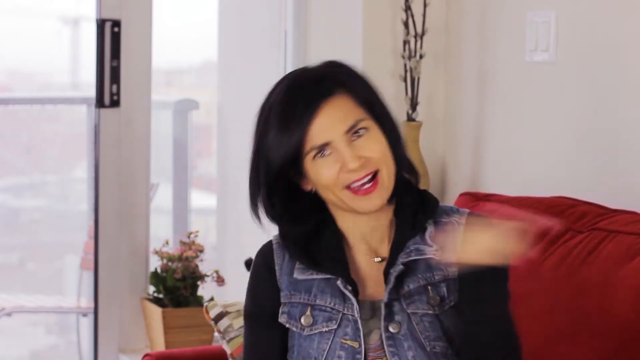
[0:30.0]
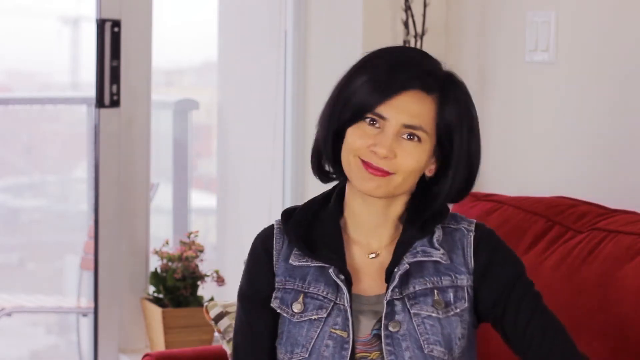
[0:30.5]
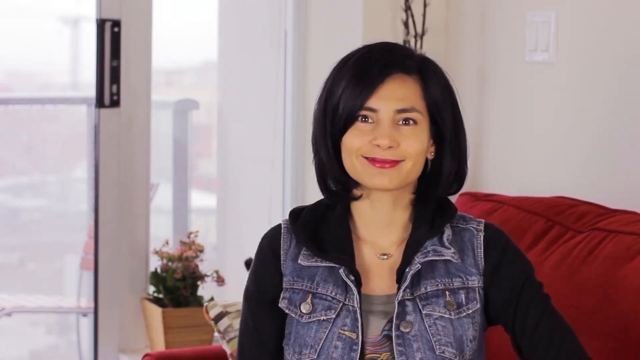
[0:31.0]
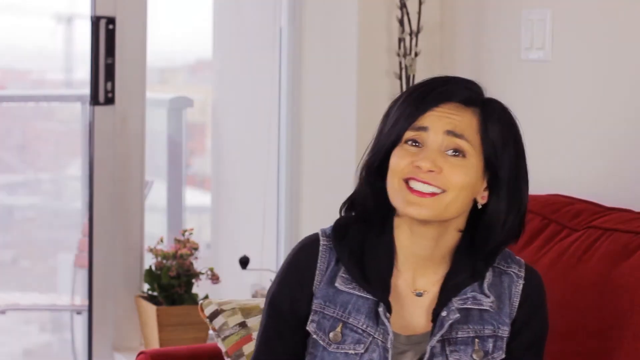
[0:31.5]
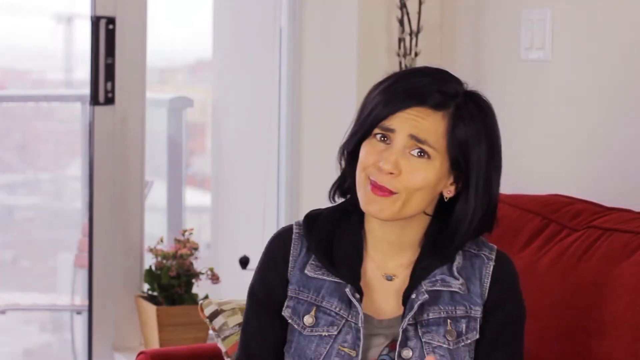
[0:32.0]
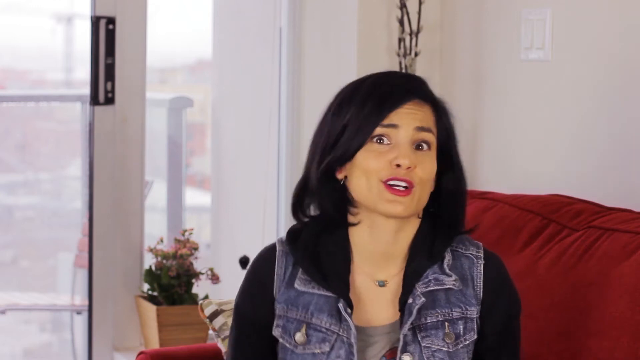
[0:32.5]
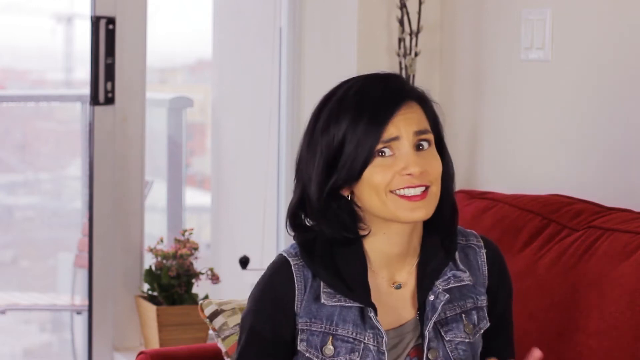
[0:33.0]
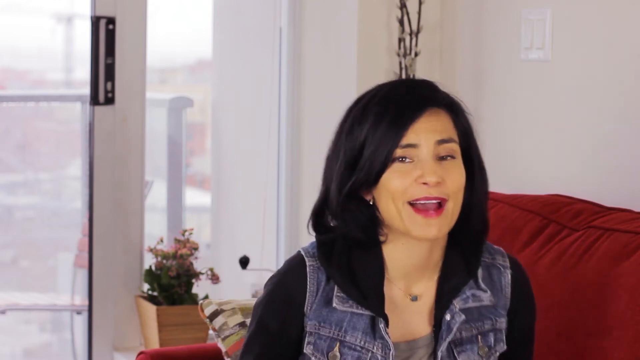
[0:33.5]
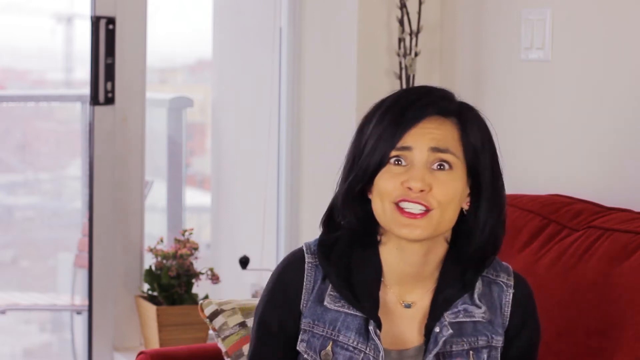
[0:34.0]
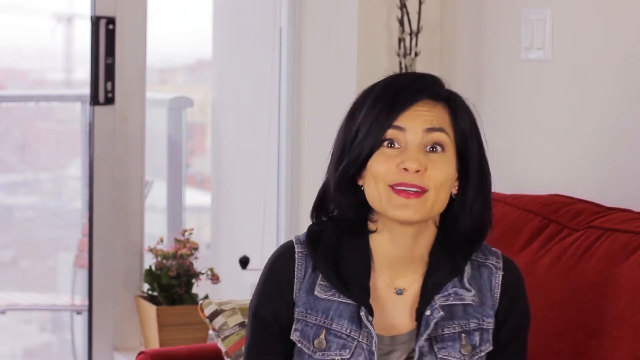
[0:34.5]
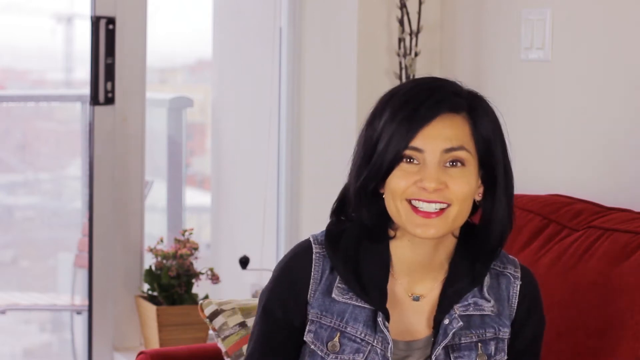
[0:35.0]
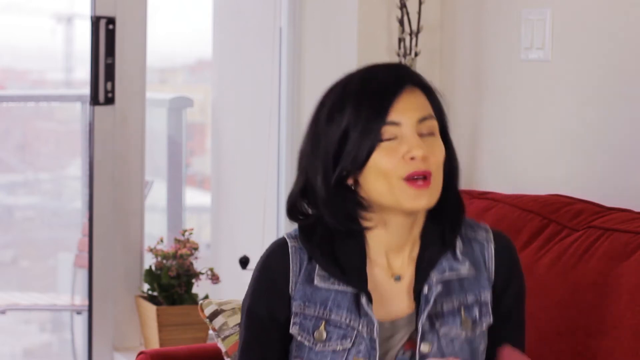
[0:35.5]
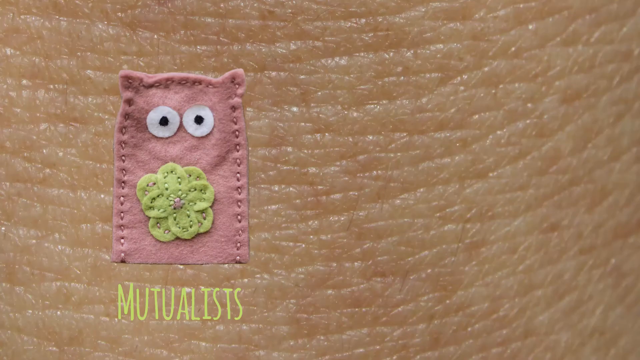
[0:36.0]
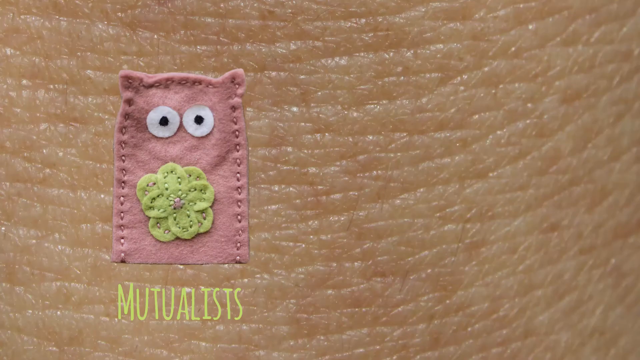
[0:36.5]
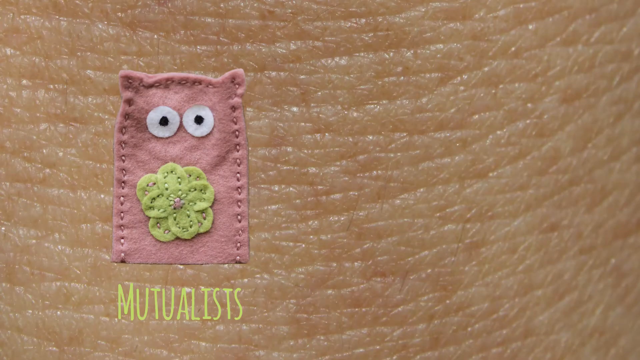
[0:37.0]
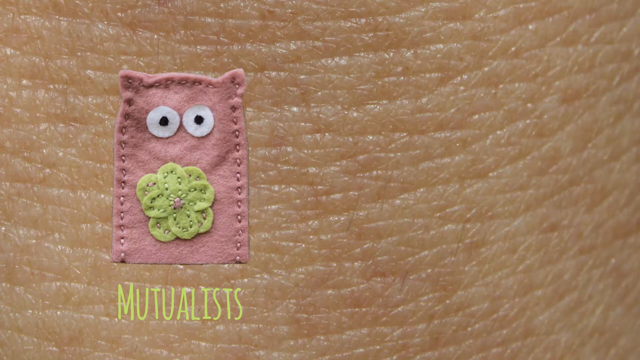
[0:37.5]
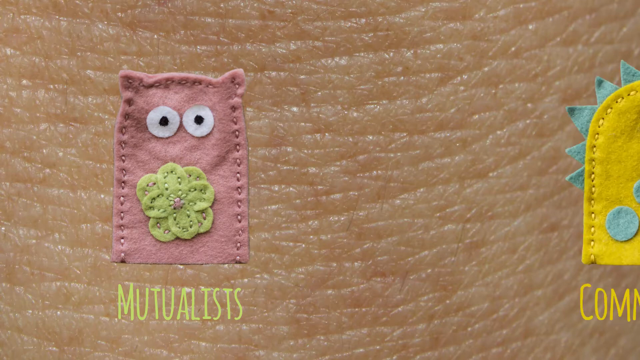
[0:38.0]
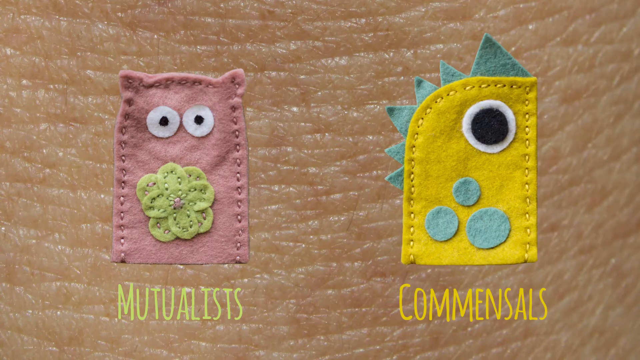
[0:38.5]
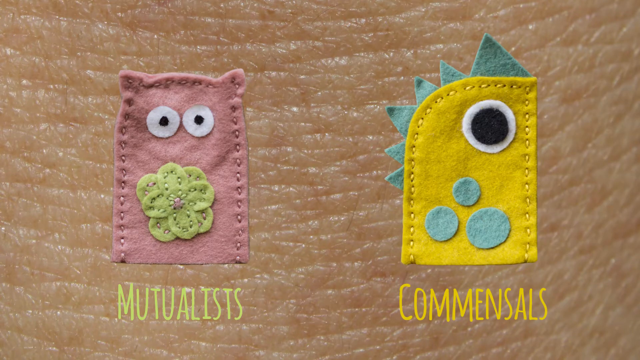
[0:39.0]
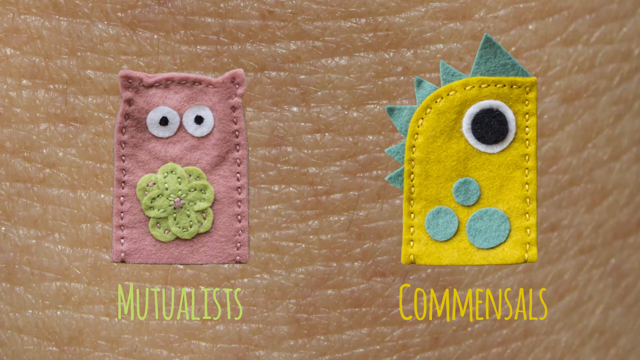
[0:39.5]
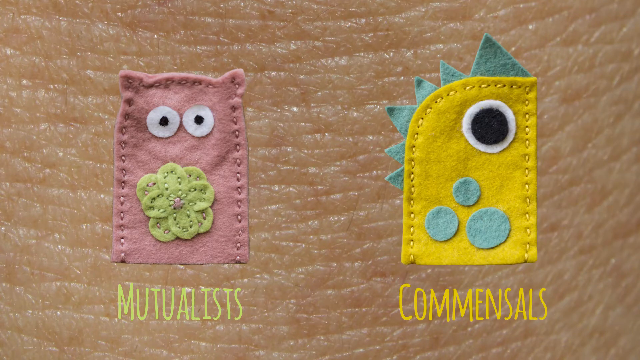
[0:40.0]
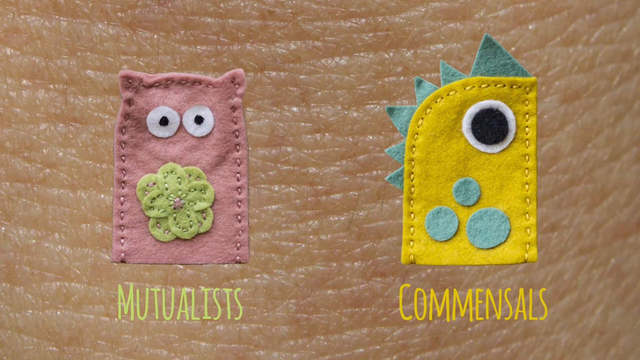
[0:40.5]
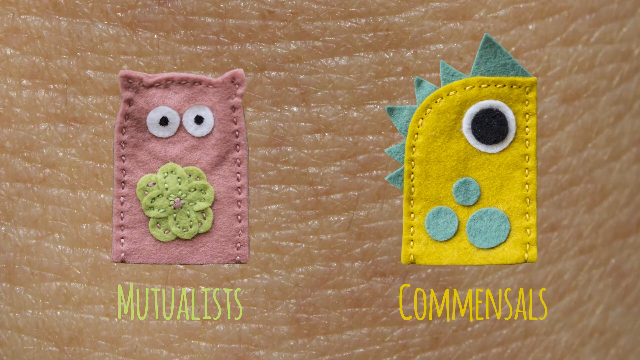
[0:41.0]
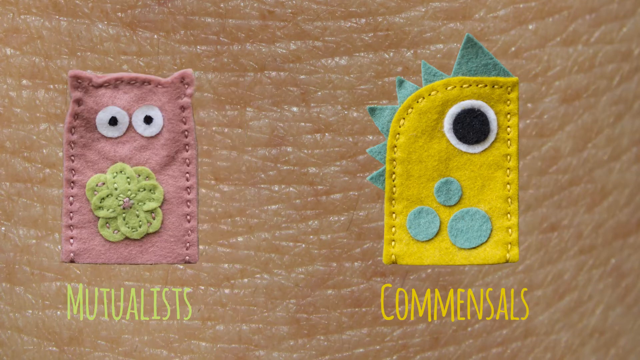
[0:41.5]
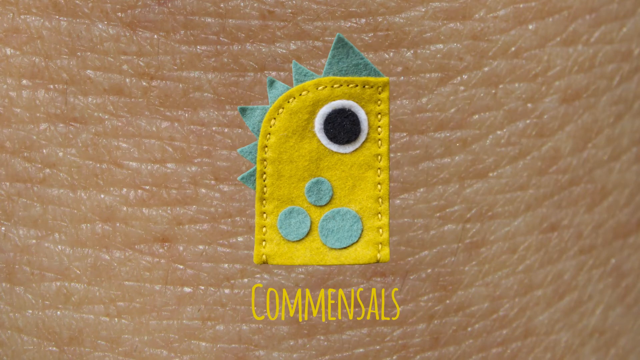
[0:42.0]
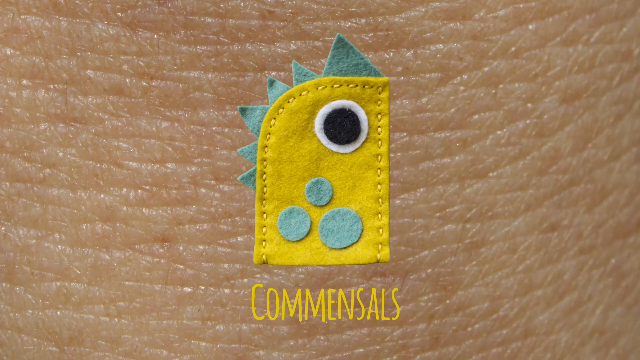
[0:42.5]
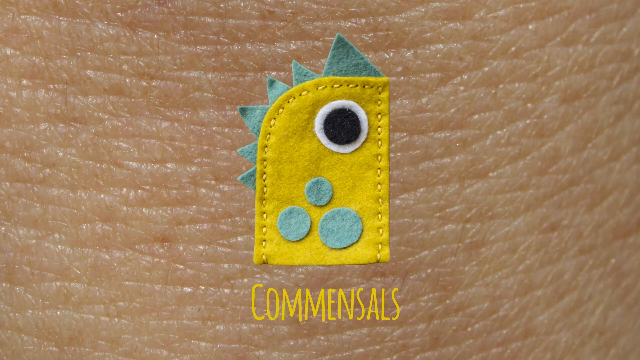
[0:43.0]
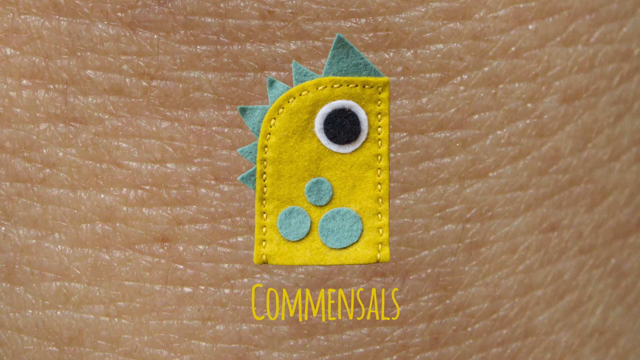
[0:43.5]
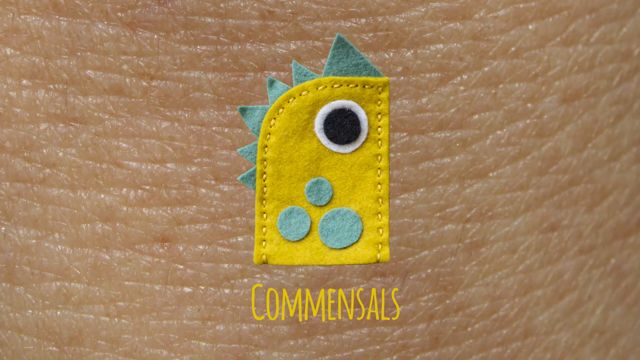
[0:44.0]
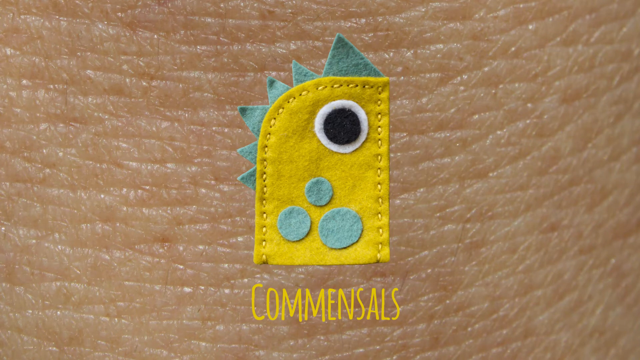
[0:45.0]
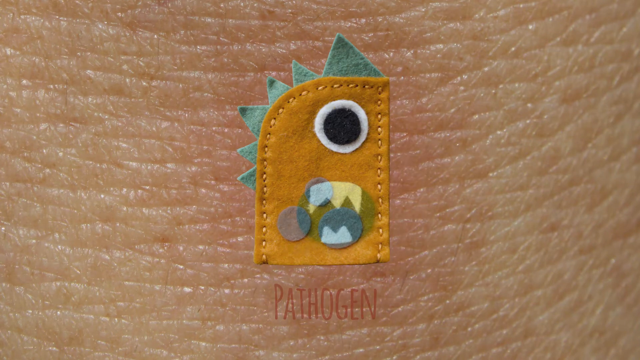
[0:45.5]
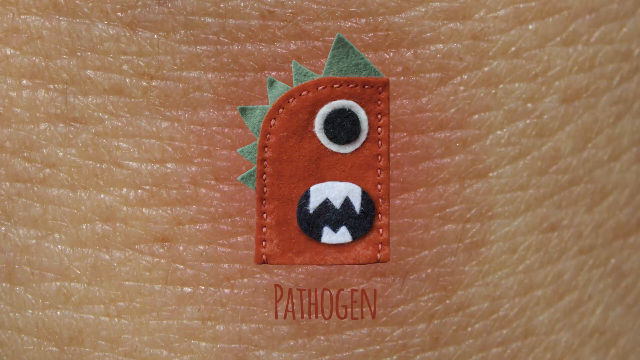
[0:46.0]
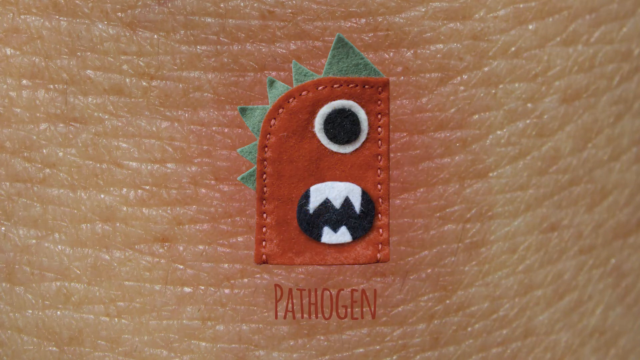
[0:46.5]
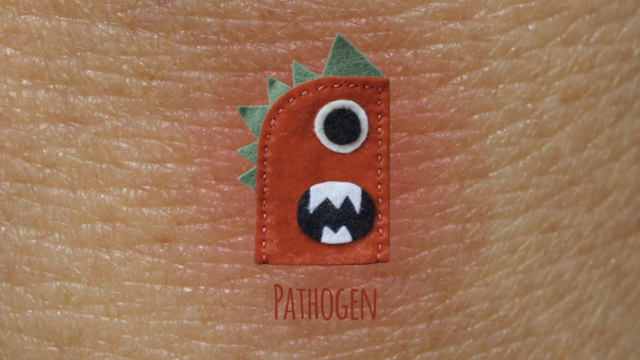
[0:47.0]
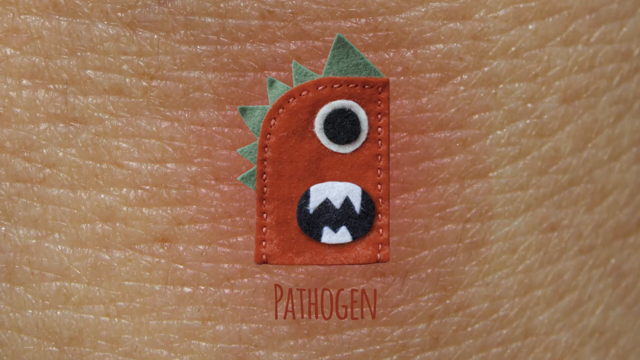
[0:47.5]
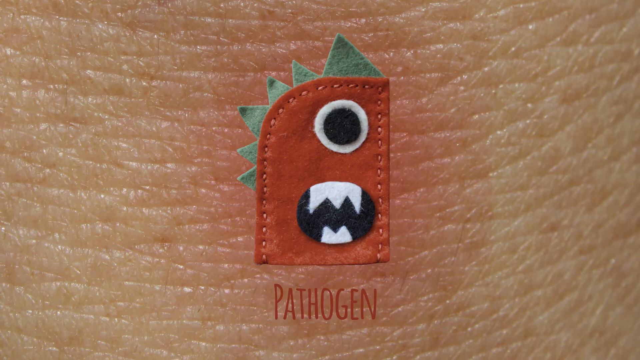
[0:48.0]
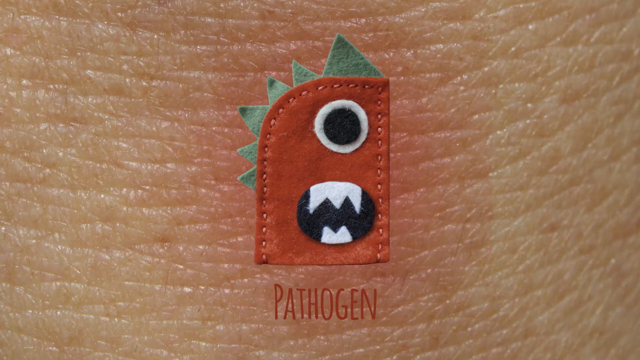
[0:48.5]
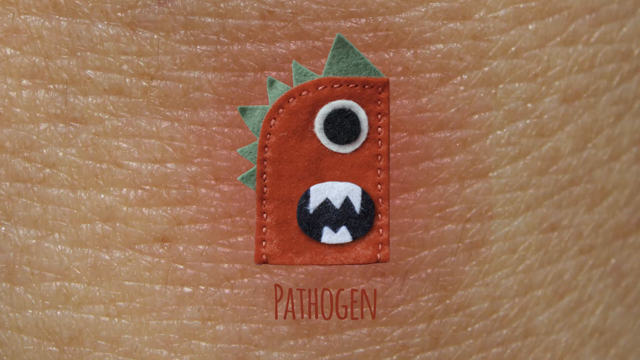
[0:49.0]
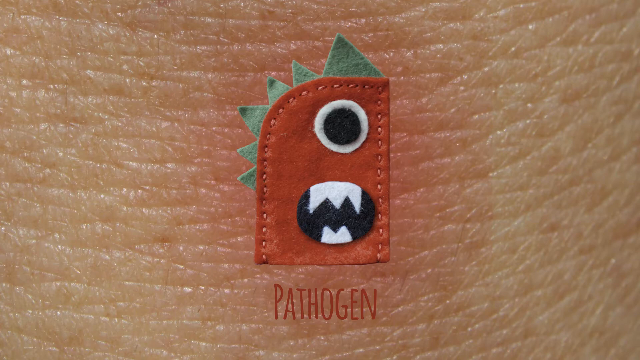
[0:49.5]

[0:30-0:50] The shot starts at the ceiling and shows the woman sitting on her bed couch, with white walls in the background. In the corner of the walls is what looks like a face with a flower, and to its left what looks like a slanted door with no curtains, reflecting the outside, where daylight from the daytime sky comes through the window. Below that is another vase of flowers. The woman speaks; she wears a thin, short-sleeved jacket over a long-sleeved black shirt and has brown-black hair, and she appears to be Indian. The scene changes to a background of human skin, where two toy-like figures pop up, one apparently representing bacteria or fungi, with other figures apparently representing common cells. The pink one moves to the left side of the screen and disappears, and another one appears and fades out of the shot. The screen then shows what looks like inflammation, identified as a pathogen.